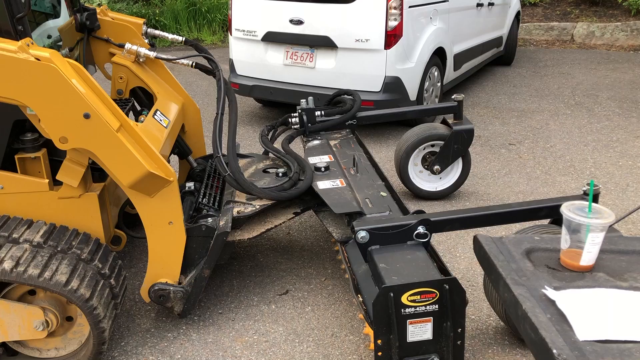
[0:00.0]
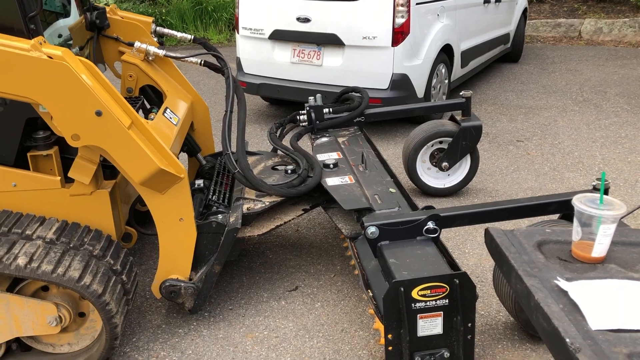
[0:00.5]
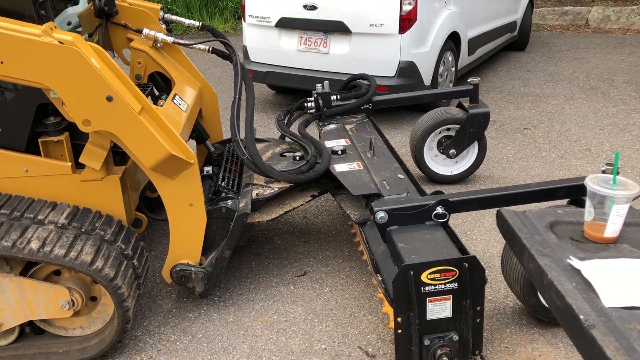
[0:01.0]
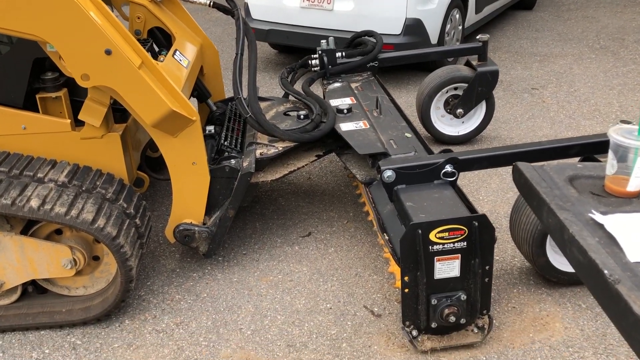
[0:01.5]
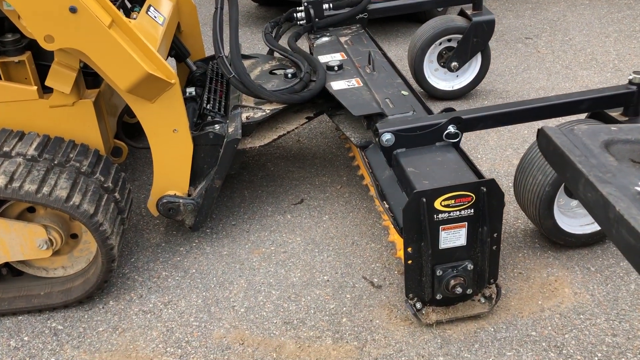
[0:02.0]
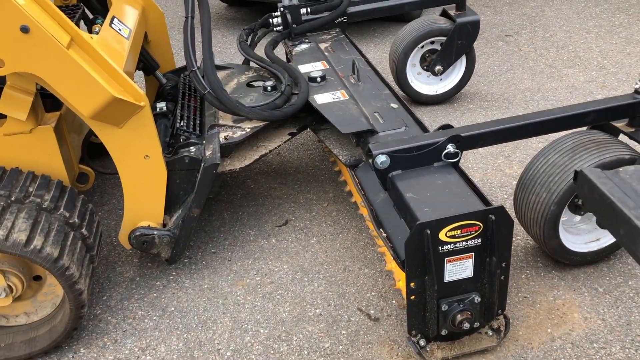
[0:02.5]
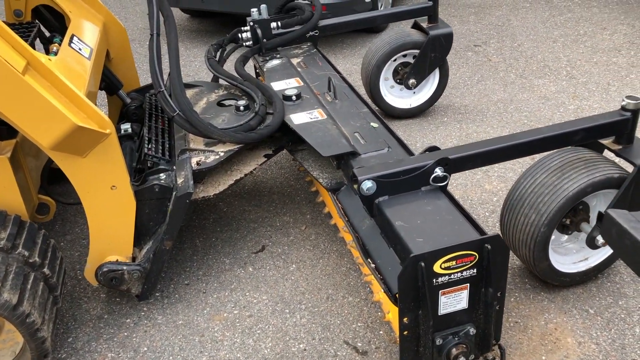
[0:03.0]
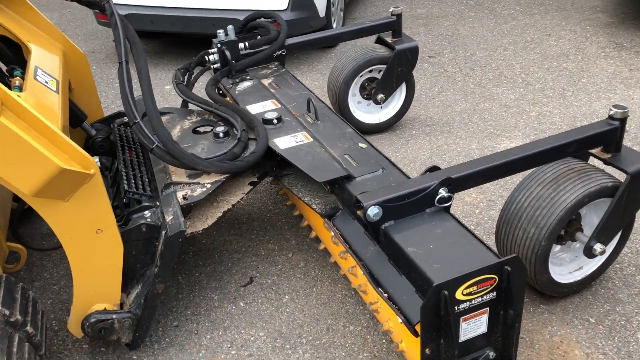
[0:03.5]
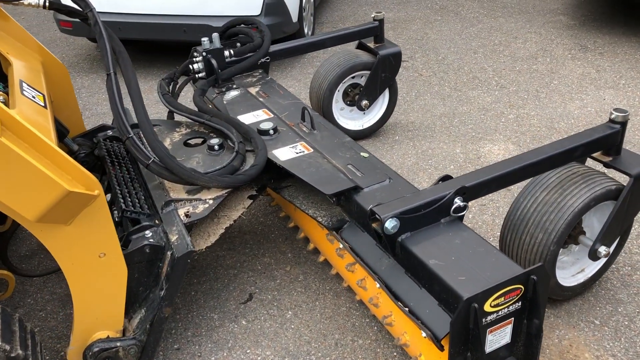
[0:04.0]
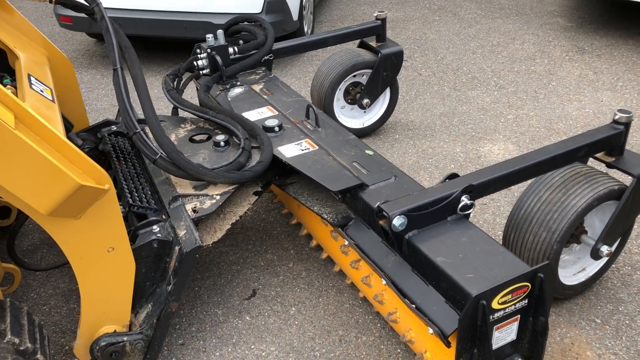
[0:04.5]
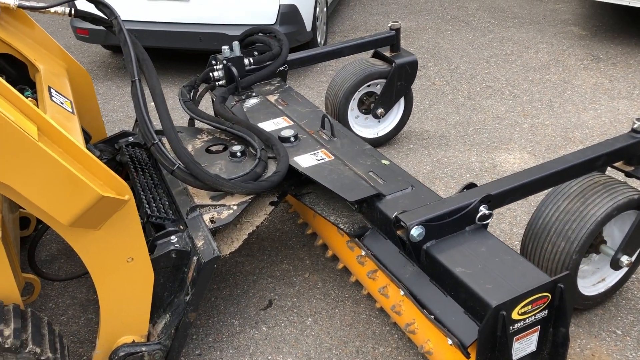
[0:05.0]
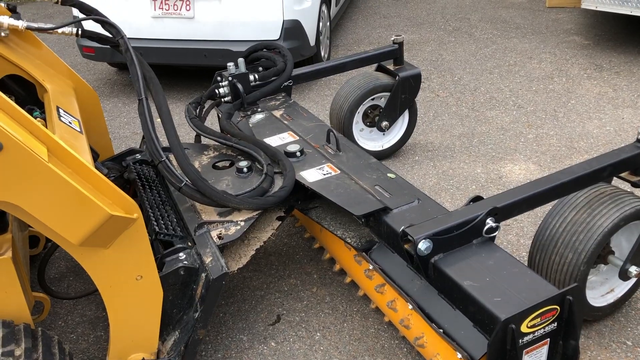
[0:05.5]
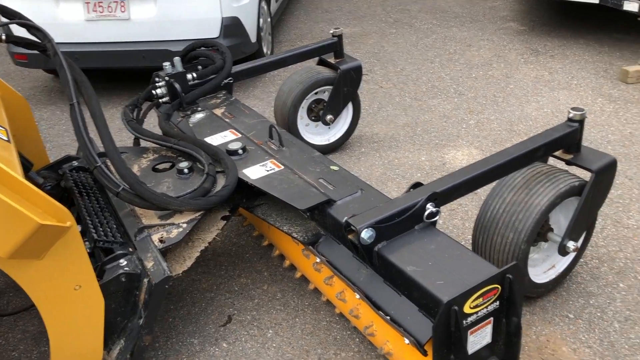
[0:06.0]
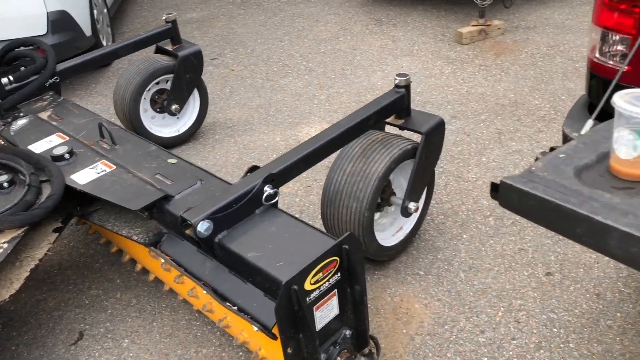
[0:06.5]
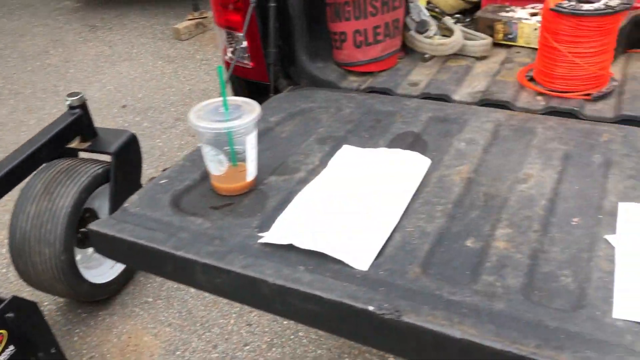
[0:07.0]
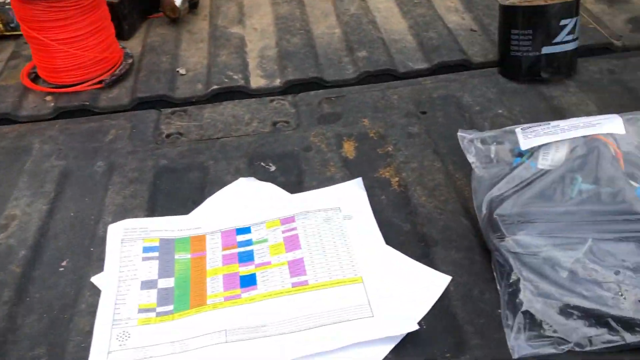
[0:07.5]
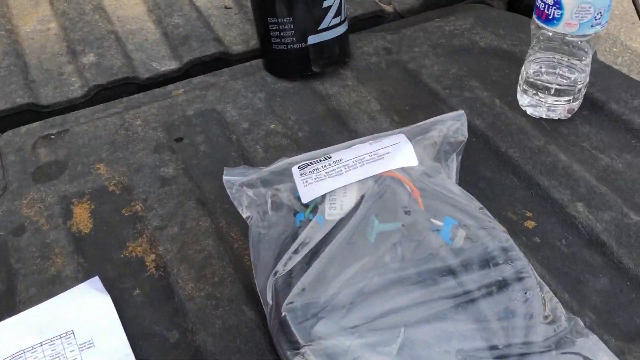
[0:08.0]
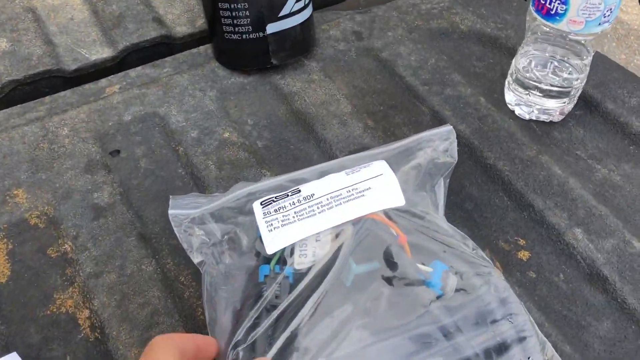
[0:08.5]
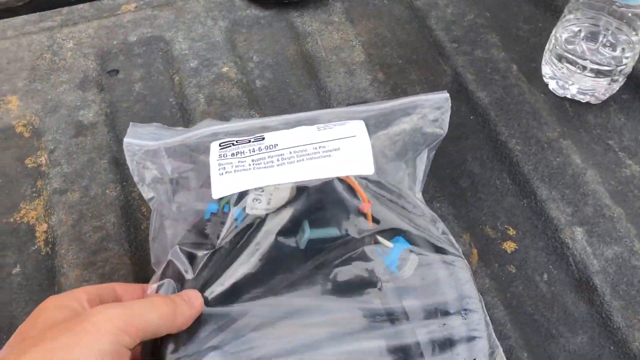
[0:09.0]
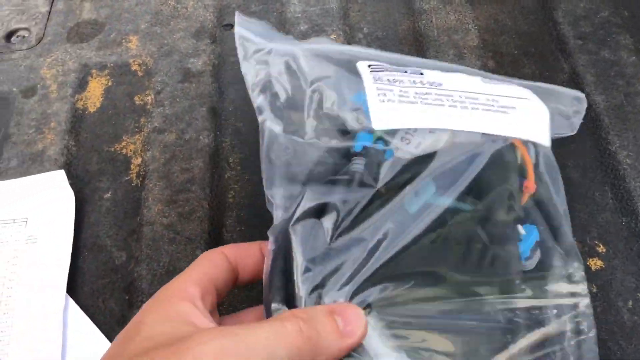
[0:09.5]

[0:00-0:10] A yellow machine used to tow vehicles has a suspension where the vehicle is fitted; the towing suspension has two tires in front and an attachment to it. A white minibus is parked very close to the suspension, and a cup of drink is close by. The truck is parked, and the camera zooms into a wire component in the line. A man picks it up and highlights it, seemingly indicating a breakdown of the vehicle. There is also a bottle of water in the vehicle.